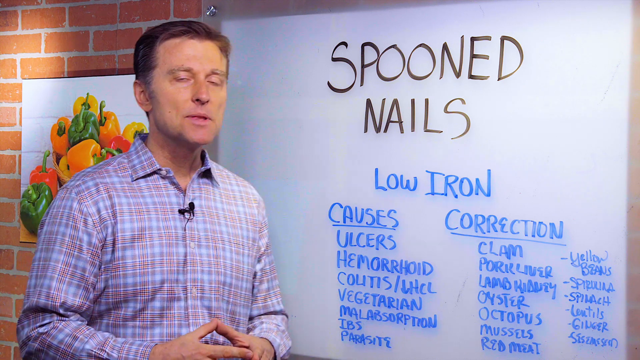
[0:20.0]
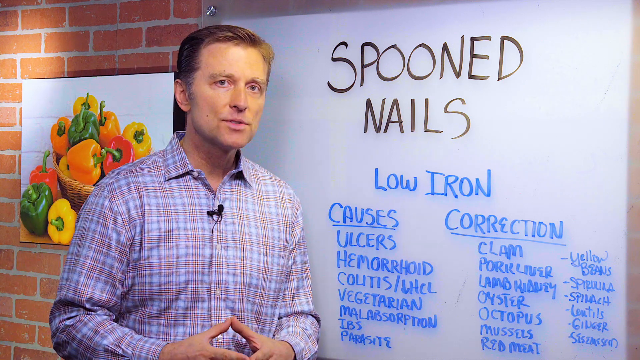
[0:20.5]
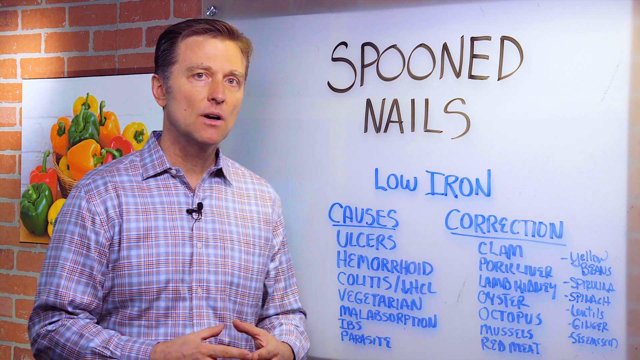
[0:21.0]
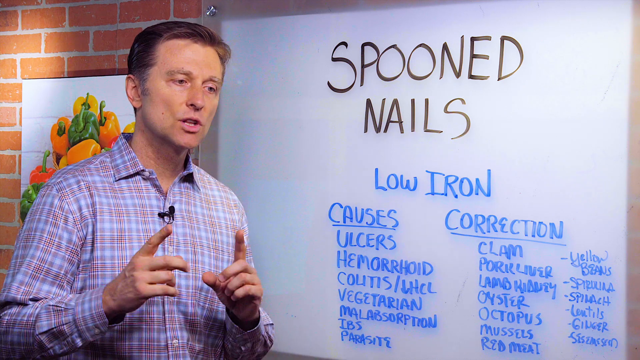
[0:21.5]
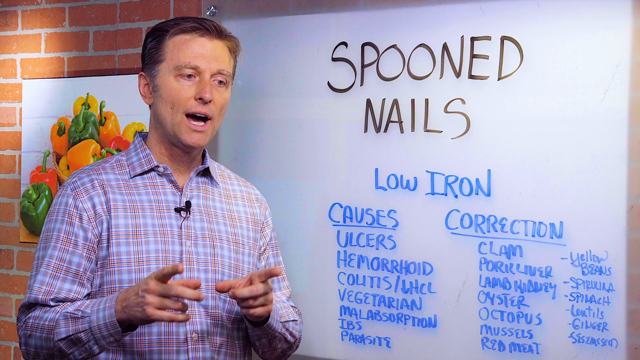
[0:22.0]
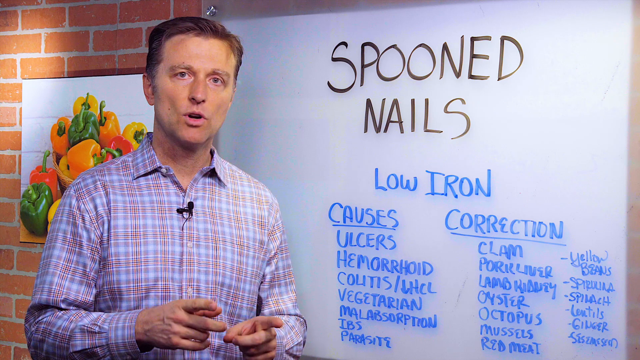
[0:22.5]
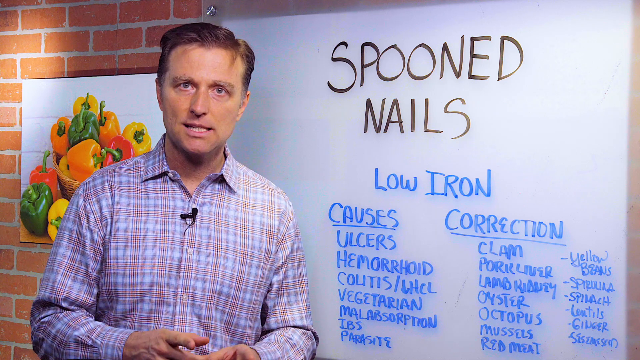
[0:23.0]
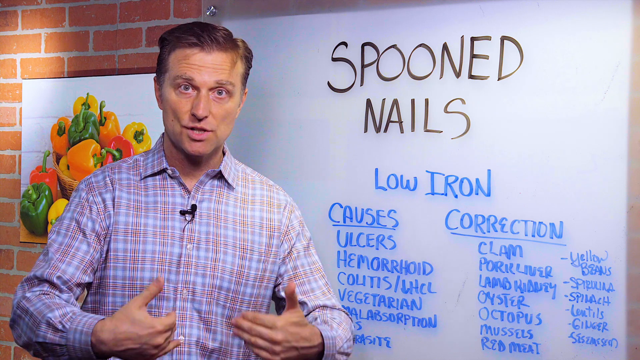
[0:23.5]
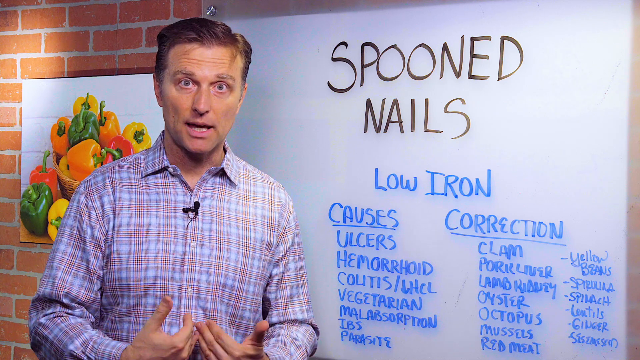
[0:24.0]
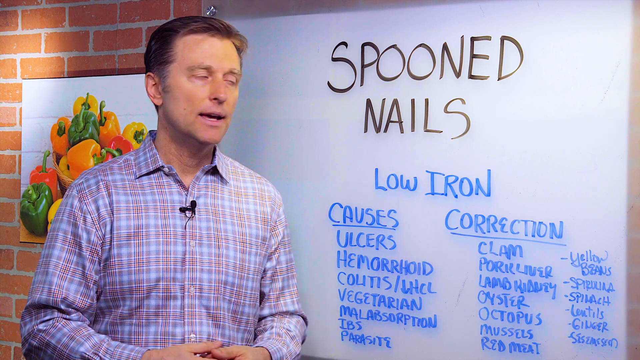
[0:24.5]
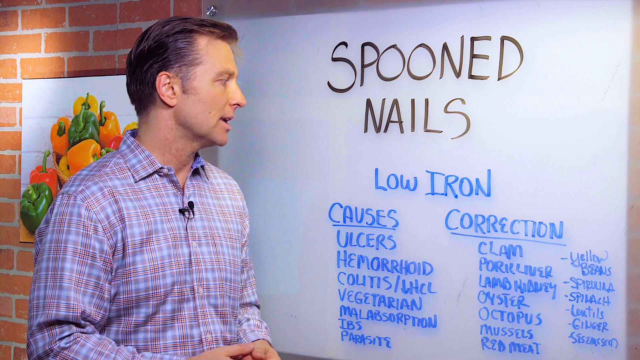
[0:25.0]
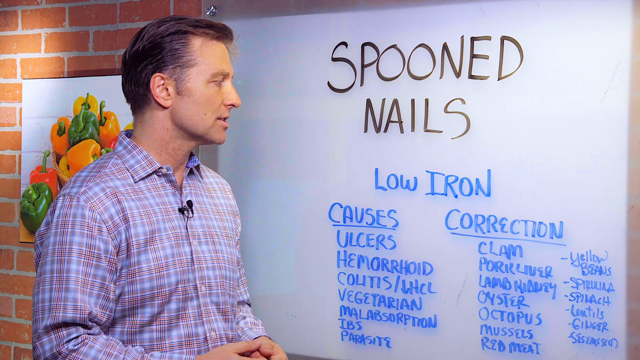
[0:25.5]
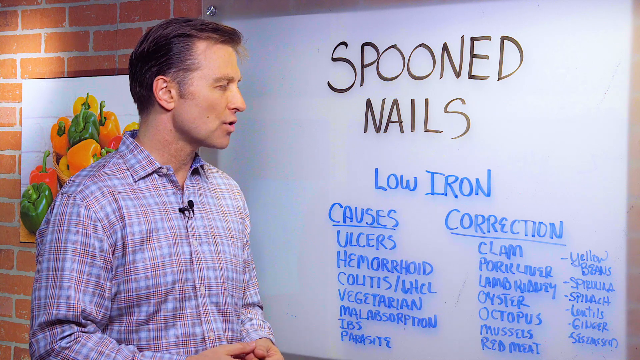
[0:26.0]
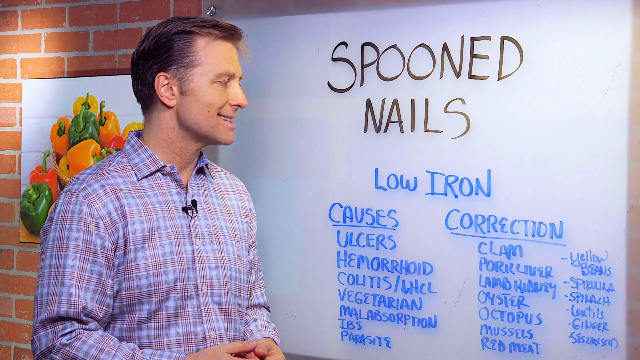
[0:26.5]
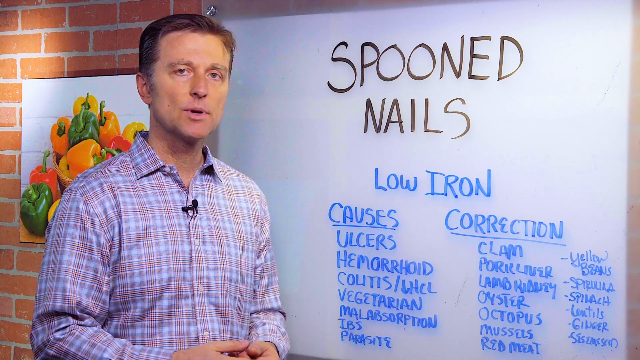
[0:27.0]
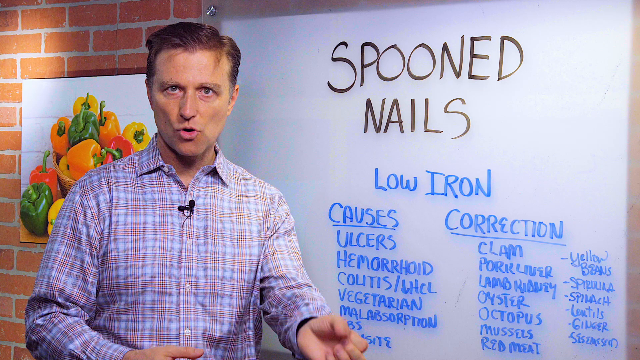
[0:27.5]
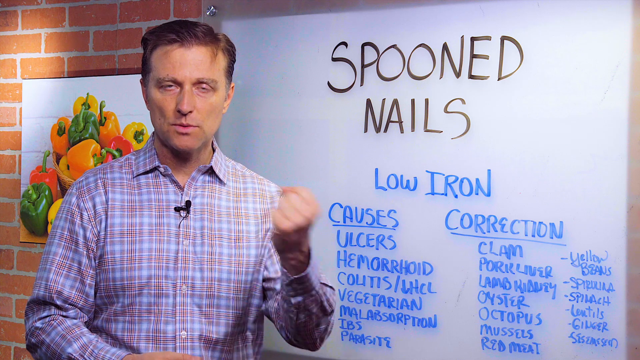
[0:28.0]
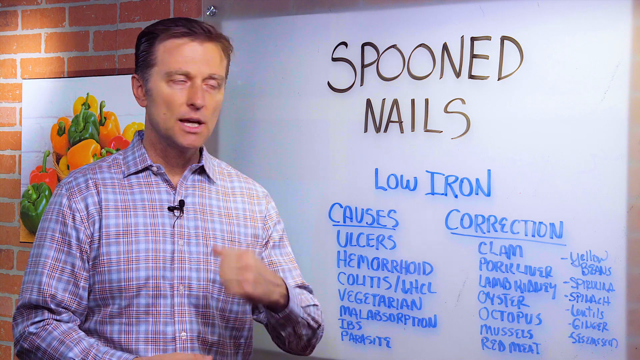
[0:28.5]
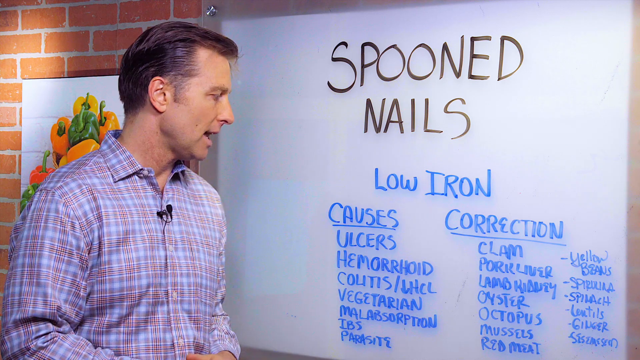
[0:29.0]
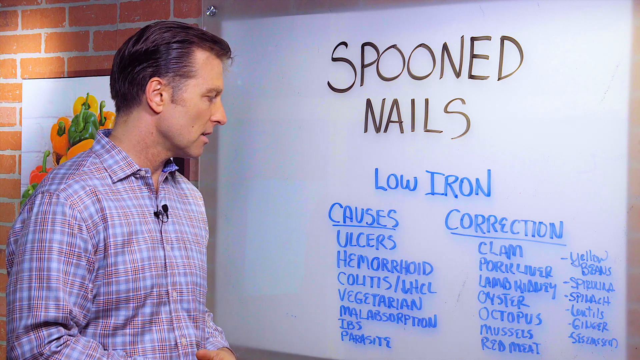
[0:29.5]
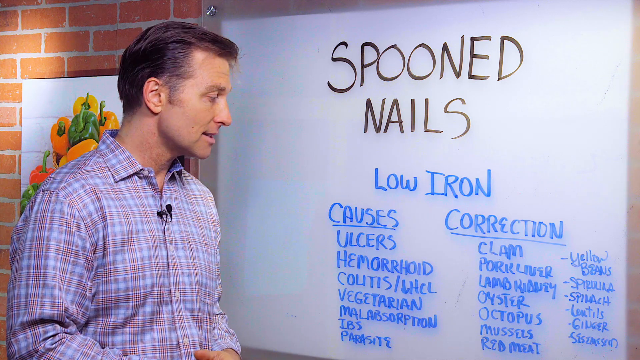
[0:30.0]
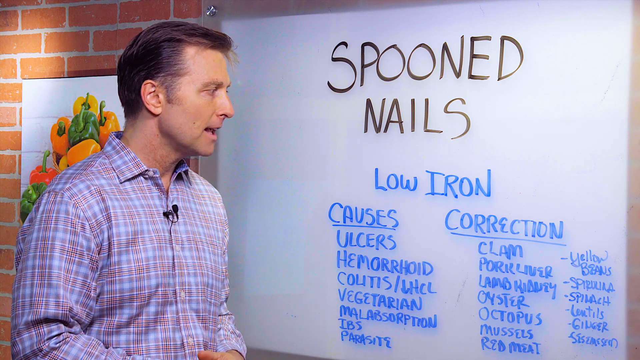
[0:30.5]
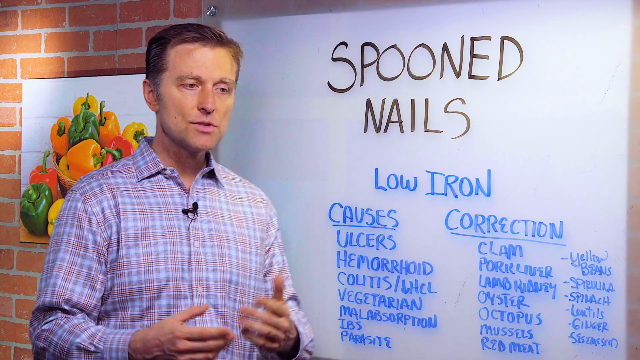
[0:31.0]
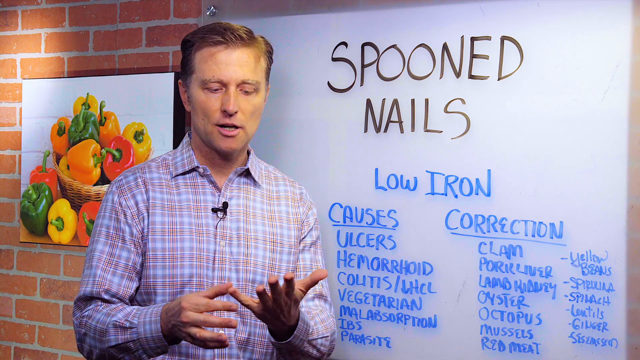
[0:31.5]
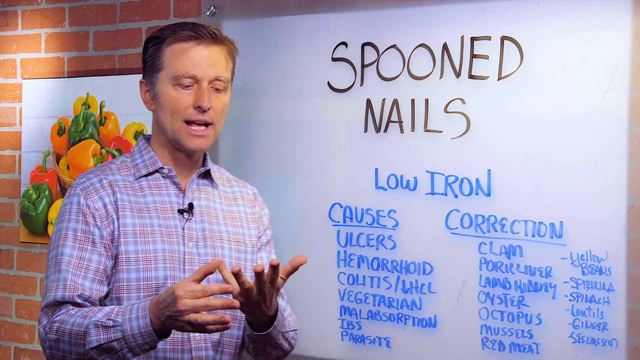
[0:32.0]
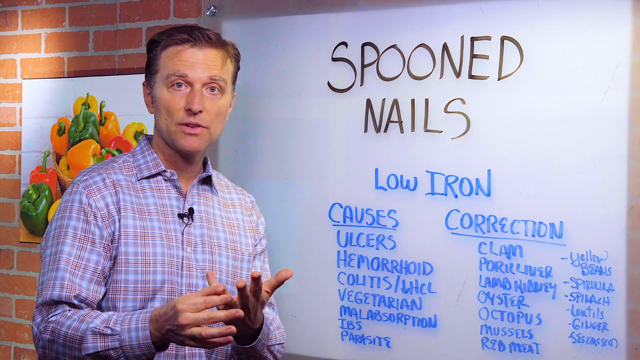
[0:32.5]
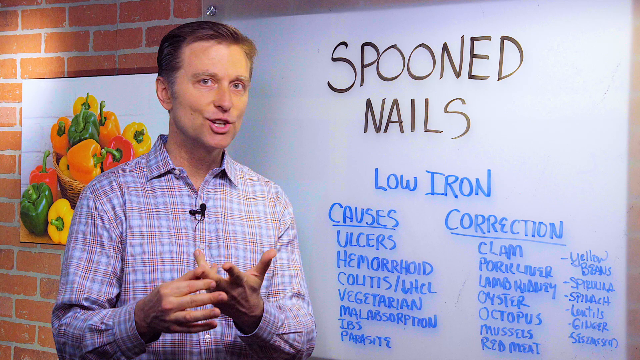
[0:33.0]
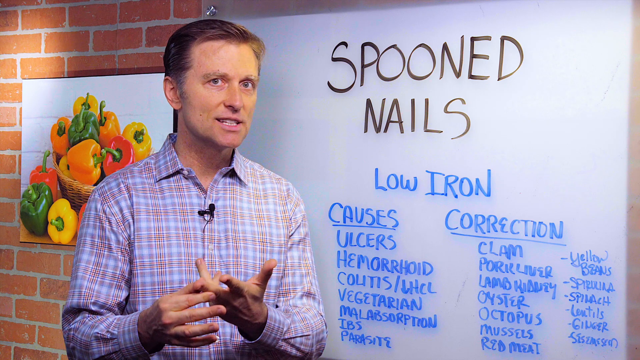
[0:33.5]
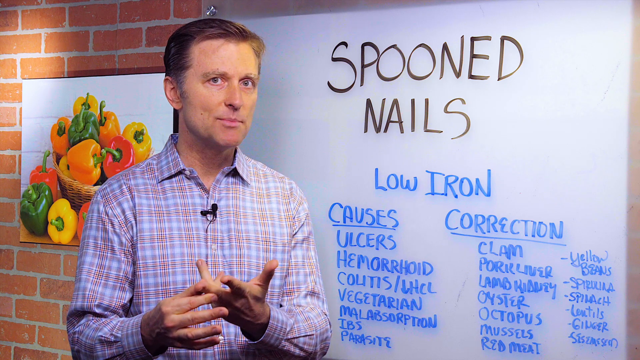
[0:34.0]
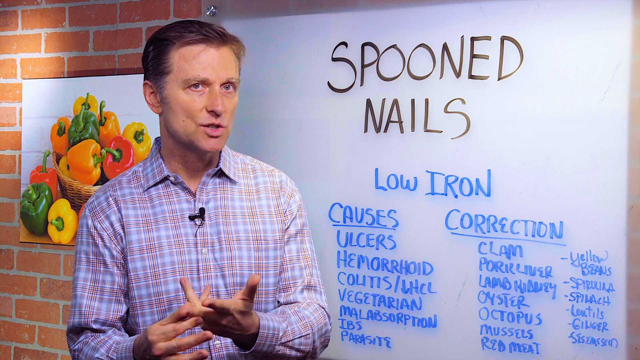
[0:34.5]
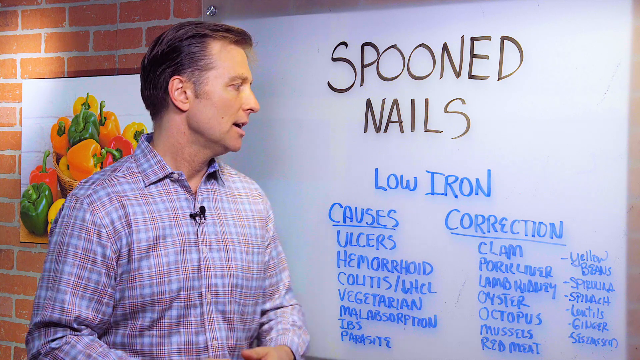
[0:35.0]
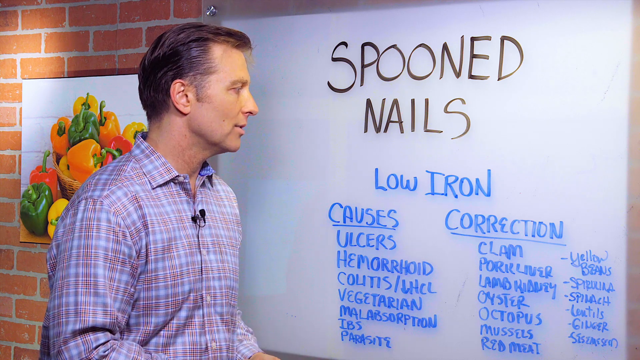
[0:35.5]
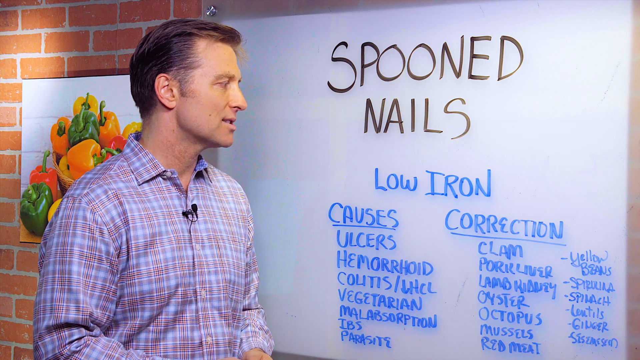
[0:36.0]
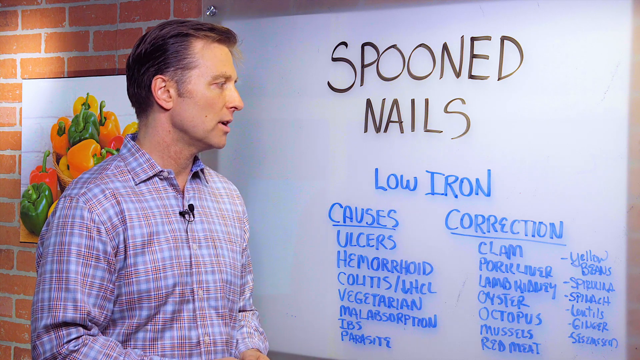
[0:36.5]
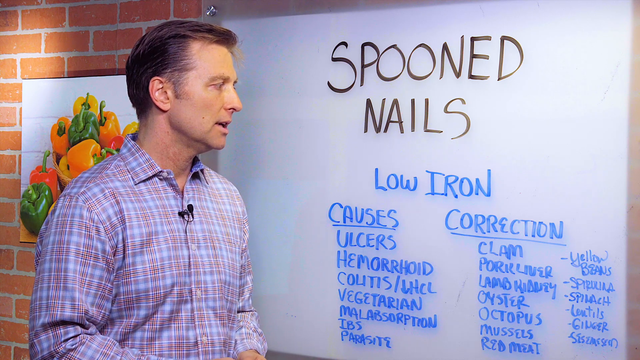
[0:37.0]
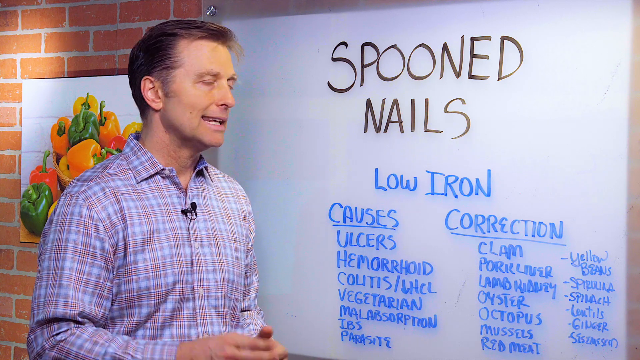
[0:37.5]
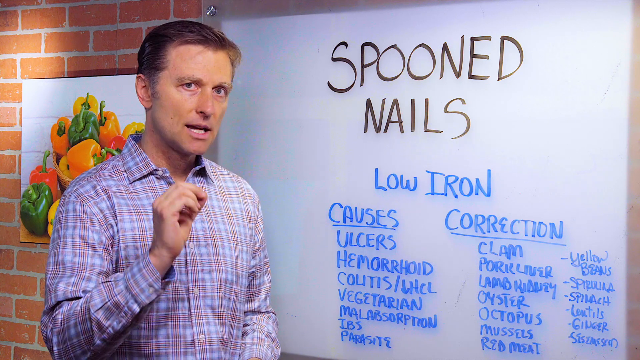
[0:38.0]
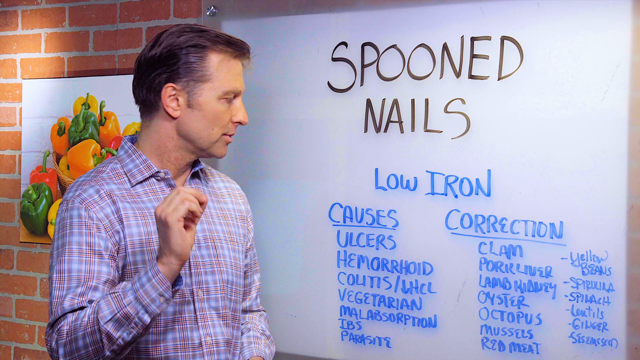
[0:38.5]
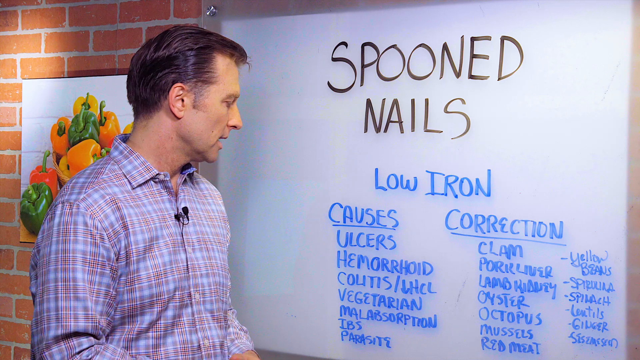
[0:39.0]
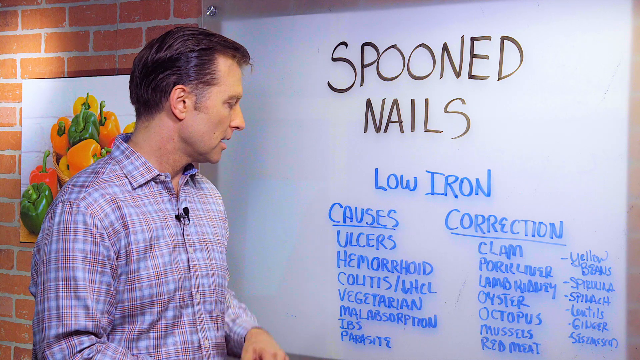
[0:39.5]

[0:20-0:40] Indoors, a man, probably in his 40s, Caucasian, with brown-blonde hair and lighter hazel eyes, talks into a camera. A microphone is clipped to the top of his button-up shirt. To his left is a white dry erase board with writing on it in both blue and black ink. He talks while kind of swaying a little, then closes his eyes, lifts his hands up, and points with both pointer fingers at the same time. After pointing a couple of times, he gestures back to himself around his tummy area, his eyebrows raised. He continues talking and turns his head to the left, so his head is semi-profile and he faces the dry erase board. He looks at it for a couple of seconds while talking, then turns back toward the camera, lifts his left arm, makes a fist, and moves it back in toward his body.